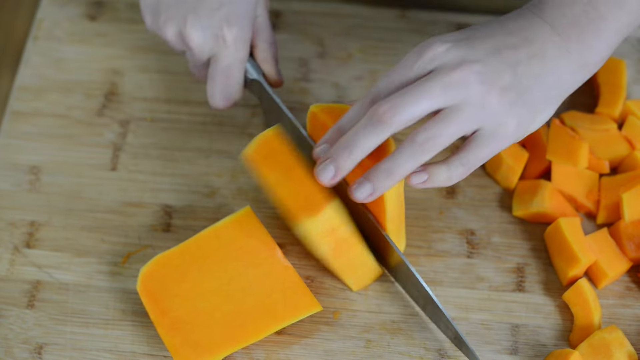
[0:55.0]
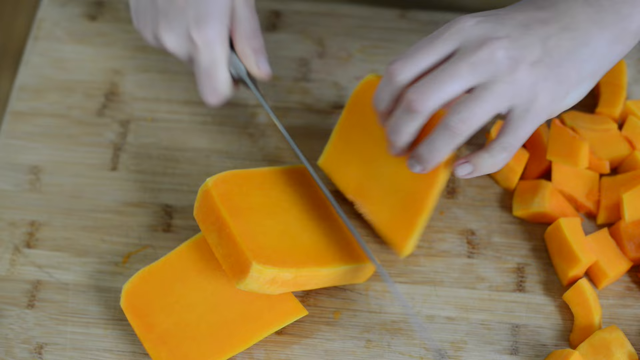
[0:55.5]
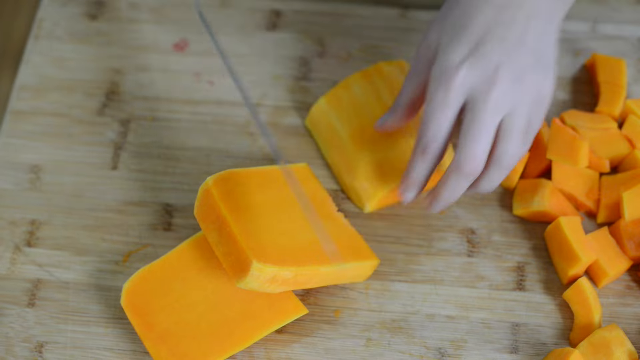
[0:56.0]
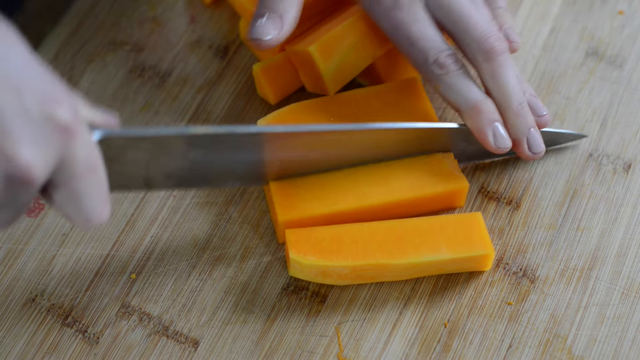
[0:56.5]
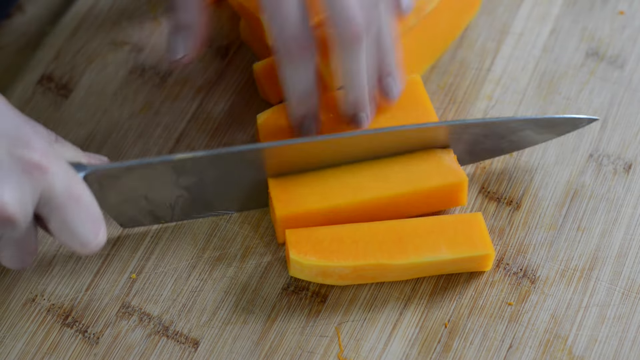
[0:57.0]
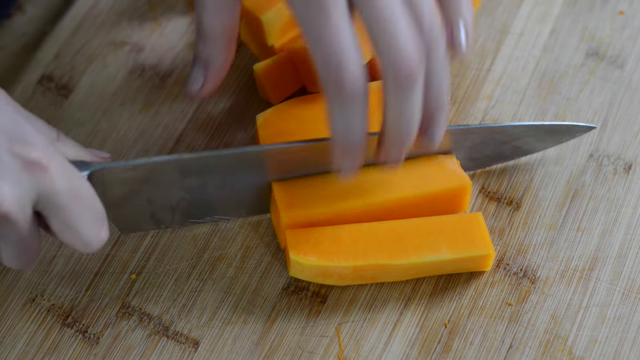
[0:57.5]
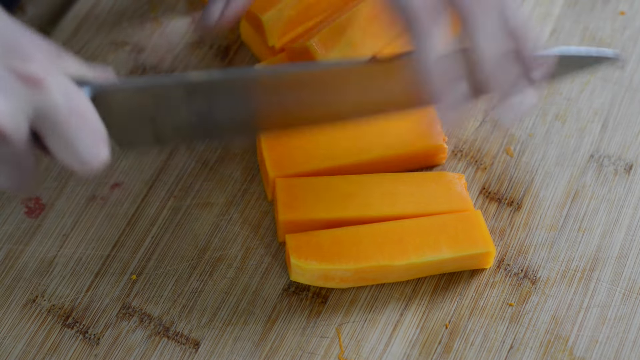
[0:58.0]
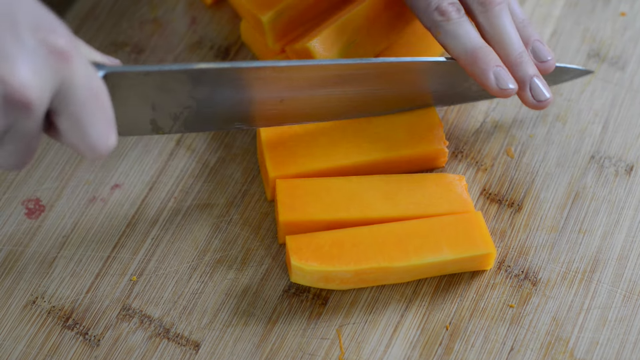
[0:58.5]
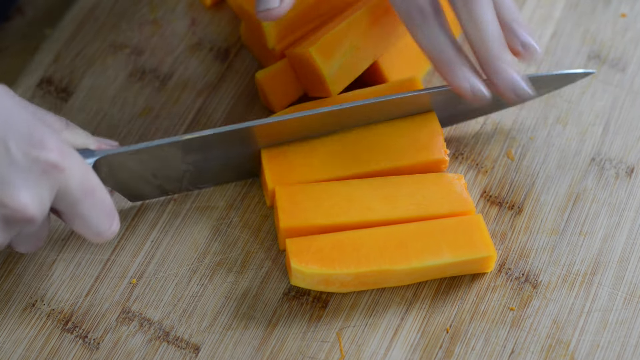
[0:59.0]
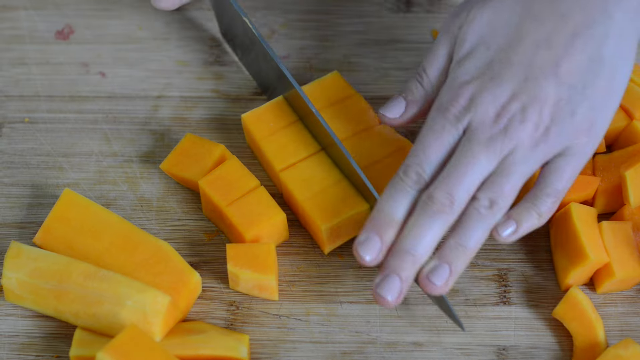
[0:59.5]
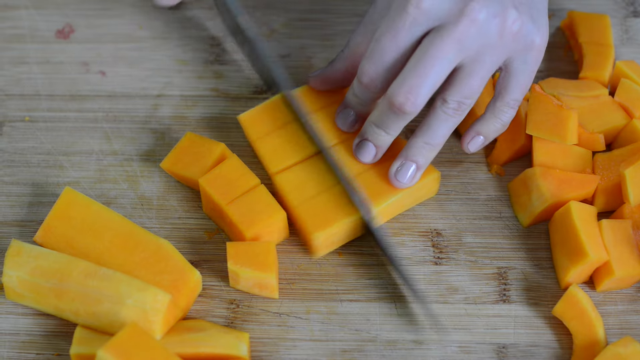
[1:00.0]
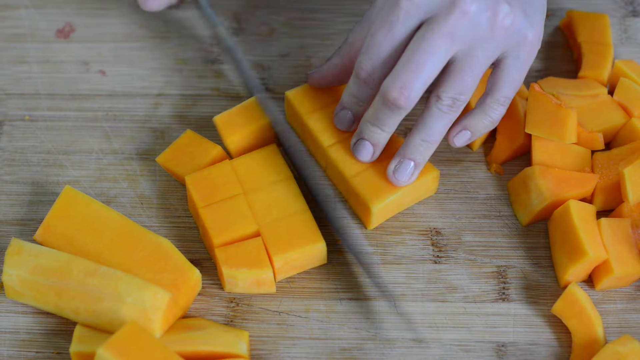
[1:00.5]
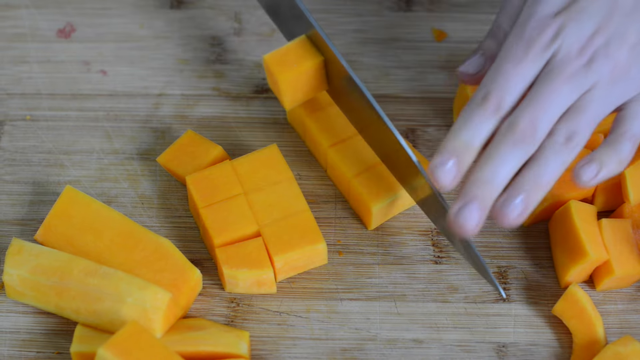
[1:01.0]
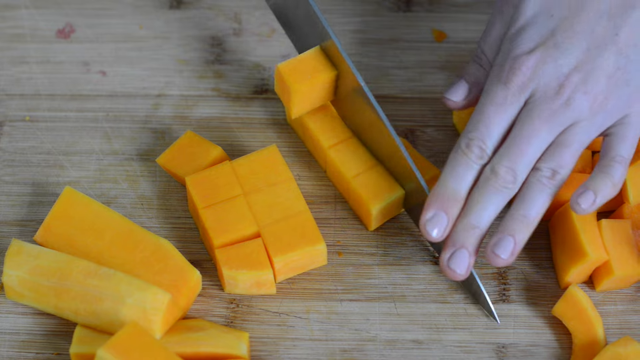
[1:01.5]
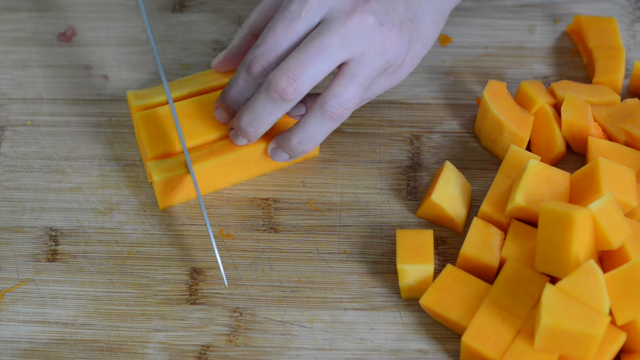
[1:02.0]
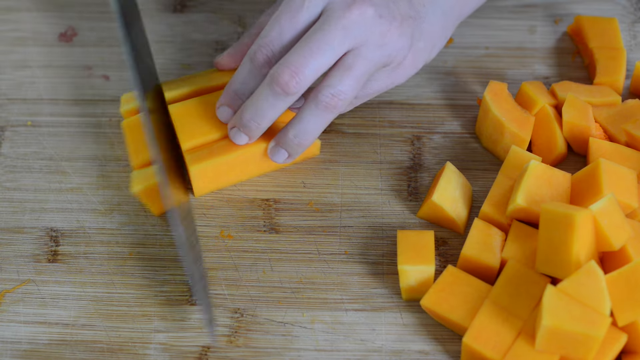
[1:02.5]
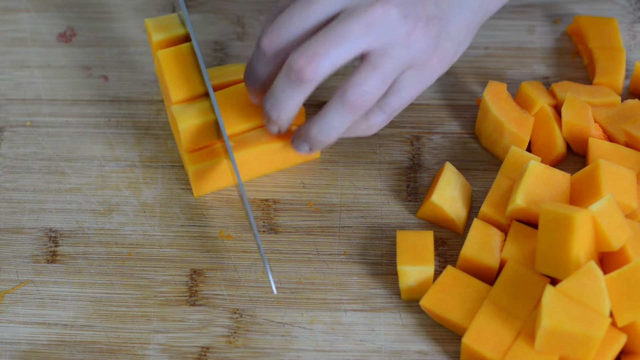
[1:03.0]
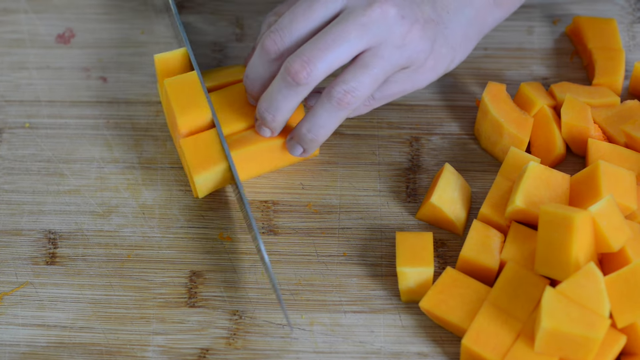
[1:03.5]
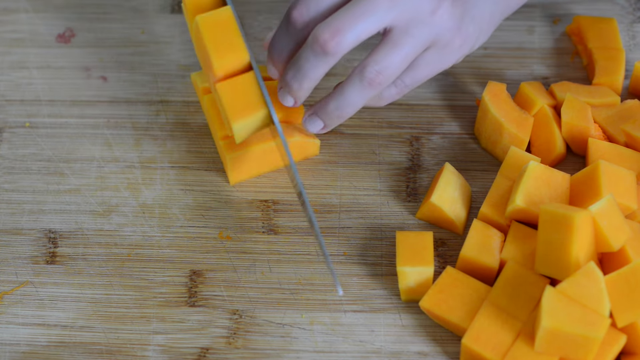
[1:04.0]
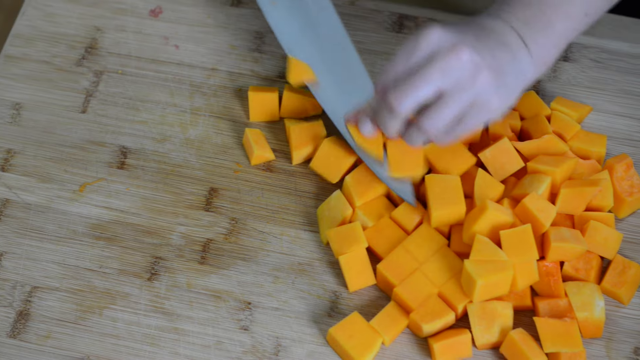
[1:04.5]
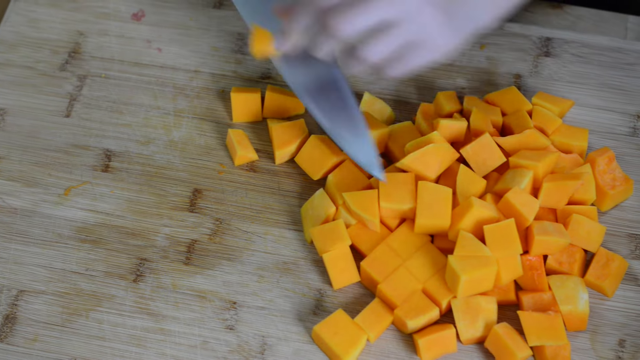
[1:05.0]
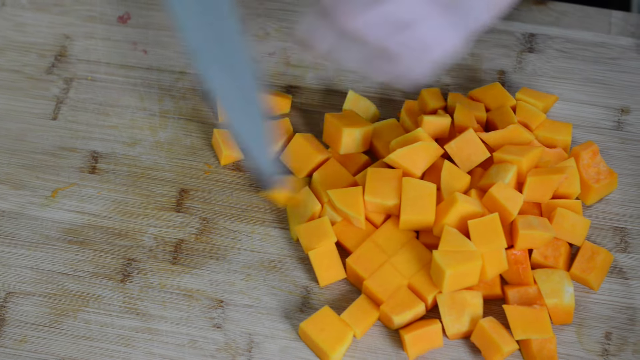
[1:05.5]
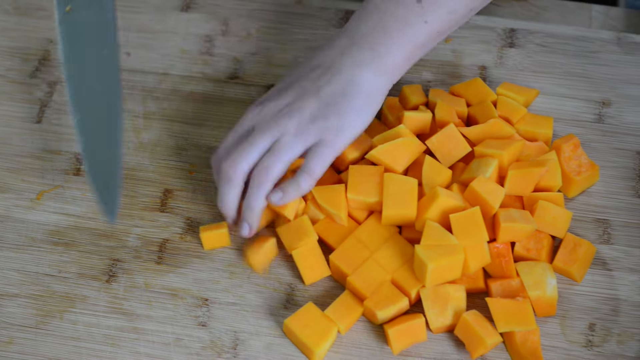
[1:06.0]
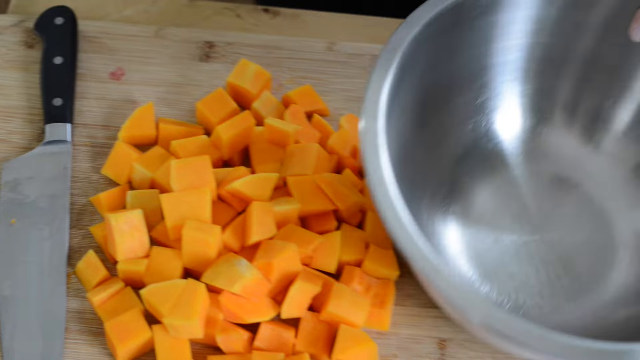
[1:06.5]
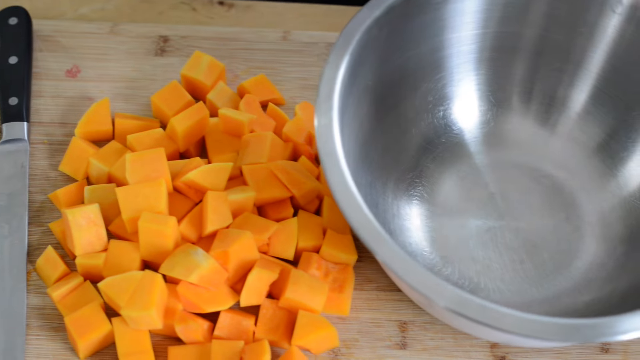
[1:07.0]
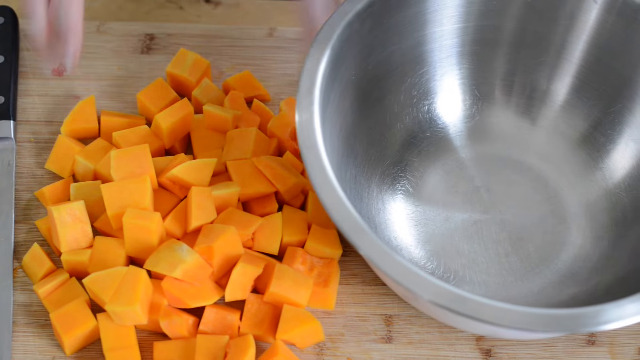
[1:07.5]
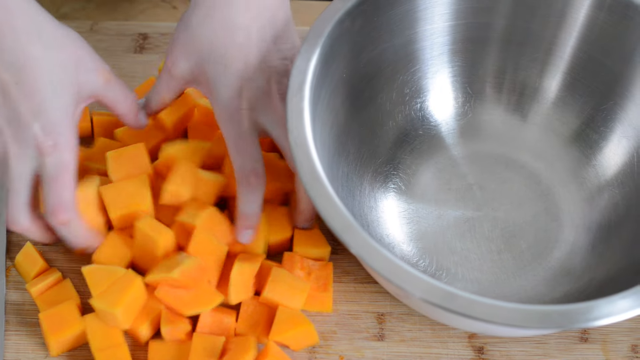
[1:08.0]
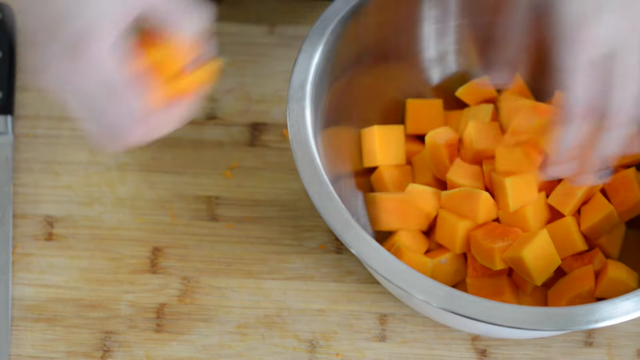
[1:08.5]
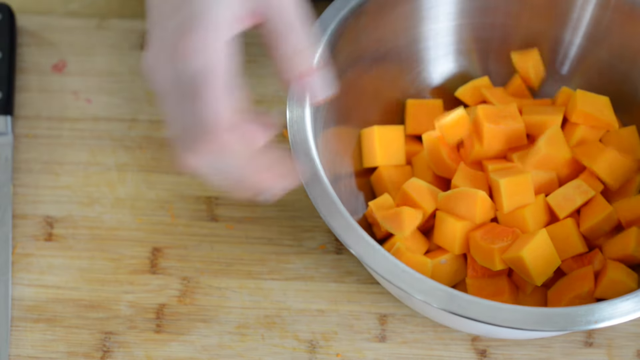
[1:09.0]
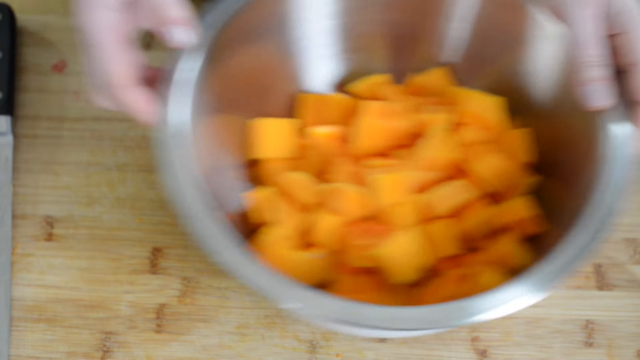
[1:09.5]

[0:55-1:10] In a cooking tutorial, a person cuts a piece of squash into large squares and then cubes it with a large silver-bladed knife, cutting quickly and neatly over and over. Only the person's hand is visible; they are Caucasian or lighter skinned. They scrape the cubed pieces on a light wood-toned cutting board with some spots of darker wood grain, pile them toward the center of the board, and then place them into a very large silver mixing bowl. Light, probably overhead lights, reflects off the surface of the bowl. The video has decent image quality and appears to be an amateur production.